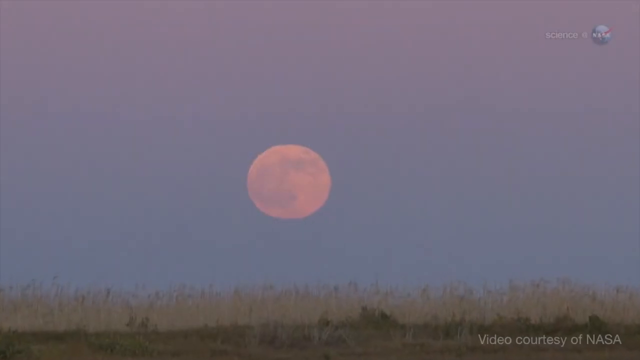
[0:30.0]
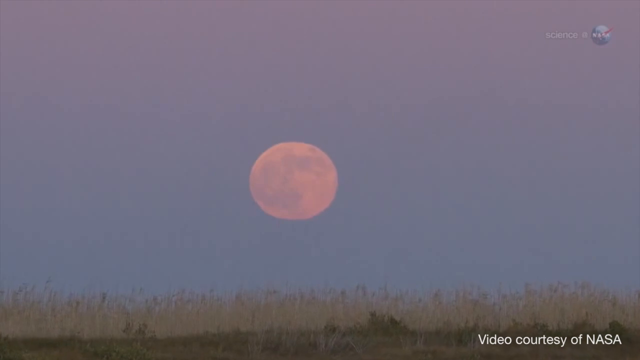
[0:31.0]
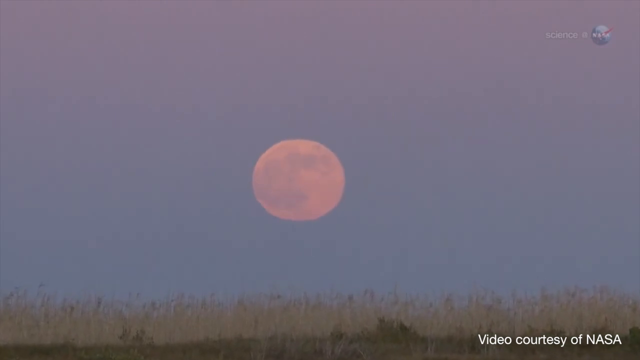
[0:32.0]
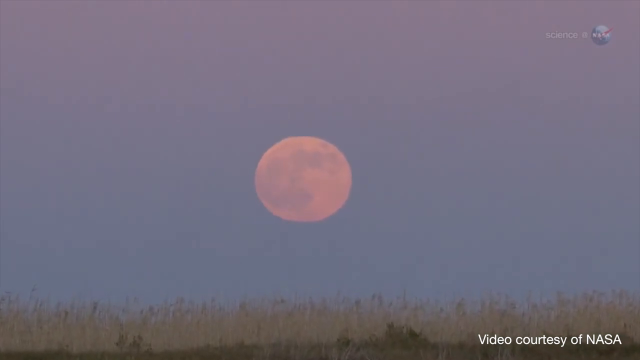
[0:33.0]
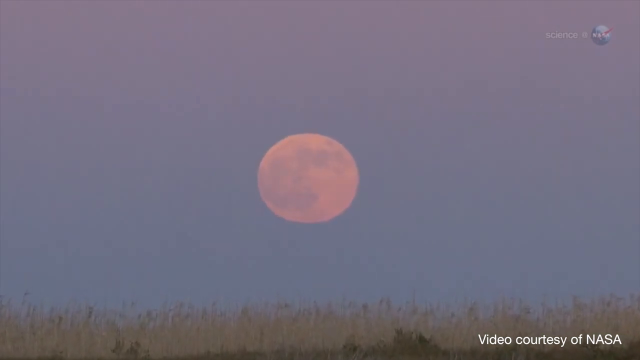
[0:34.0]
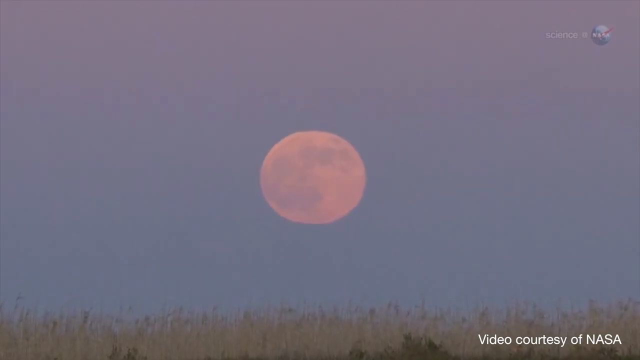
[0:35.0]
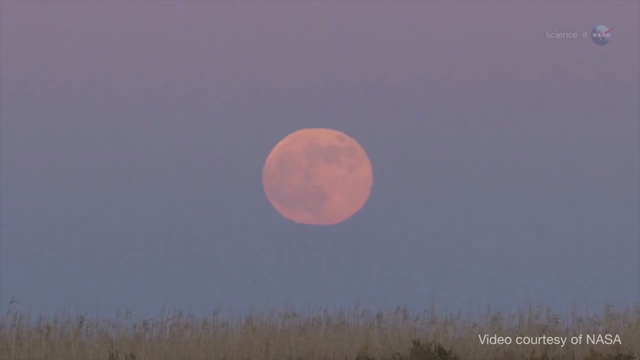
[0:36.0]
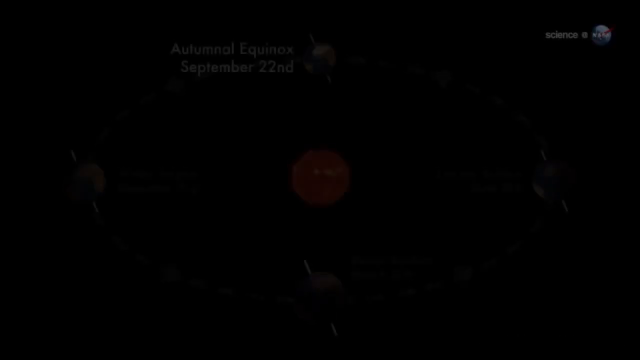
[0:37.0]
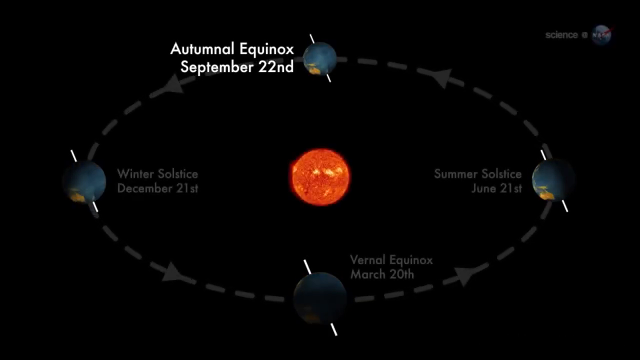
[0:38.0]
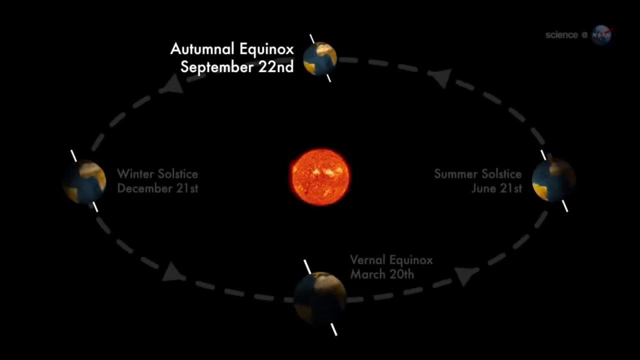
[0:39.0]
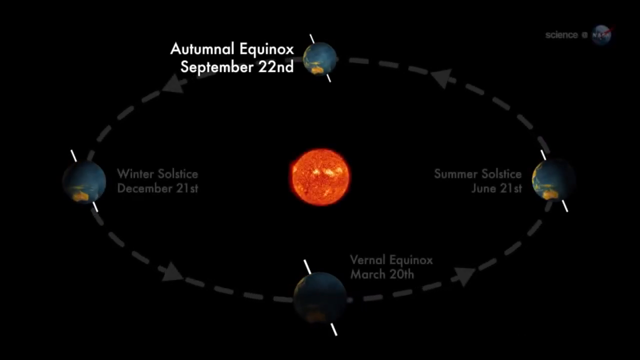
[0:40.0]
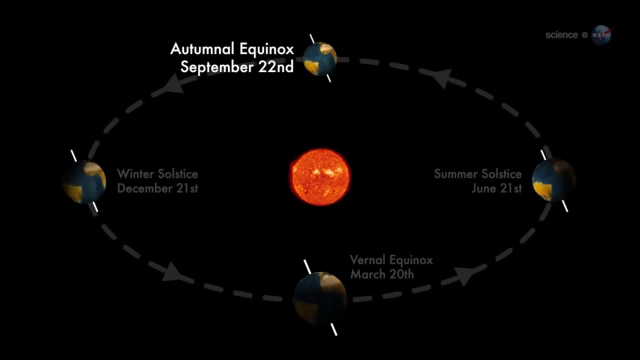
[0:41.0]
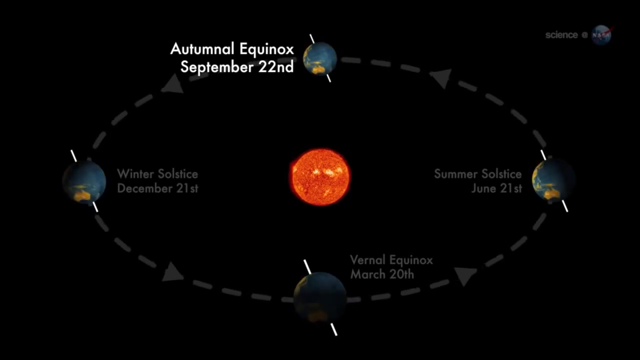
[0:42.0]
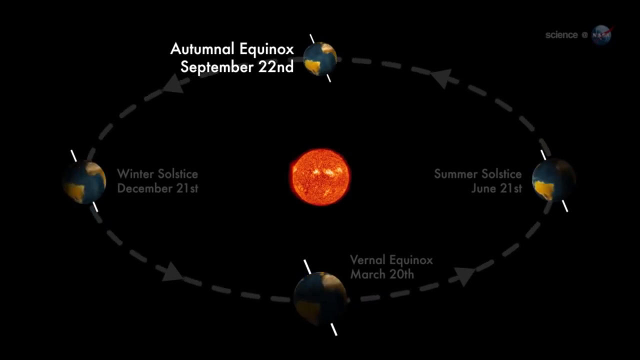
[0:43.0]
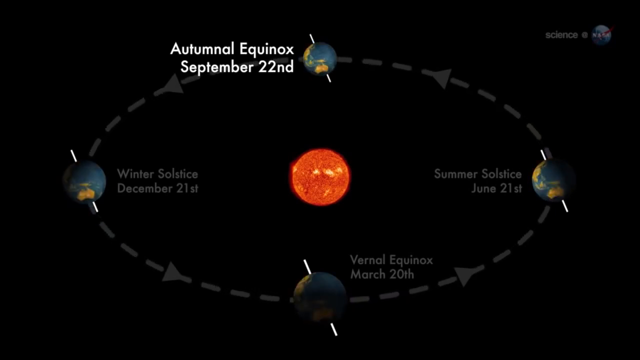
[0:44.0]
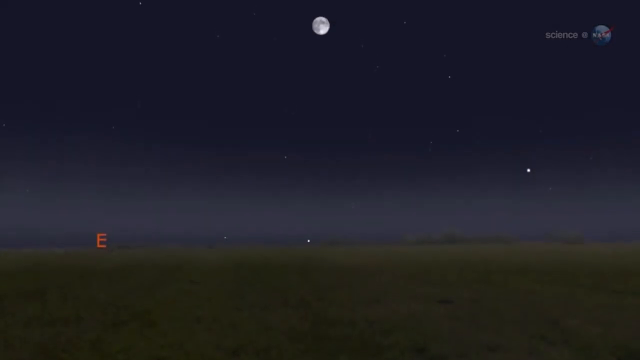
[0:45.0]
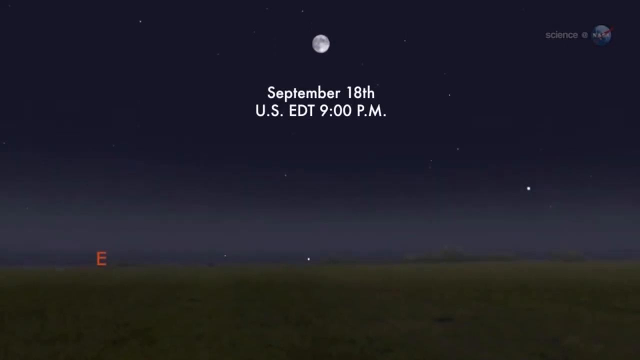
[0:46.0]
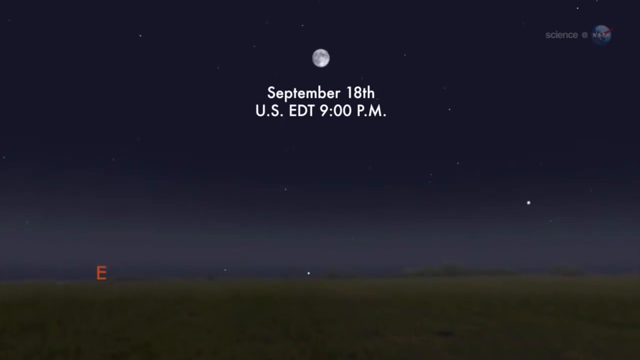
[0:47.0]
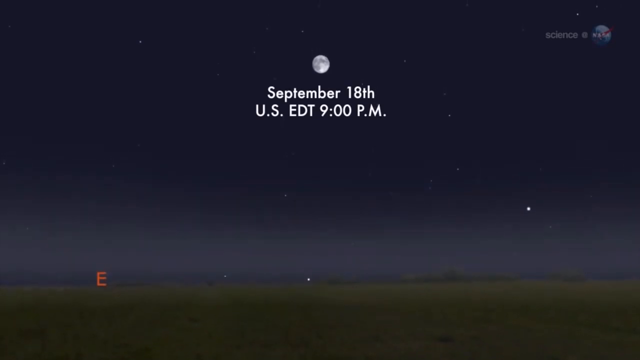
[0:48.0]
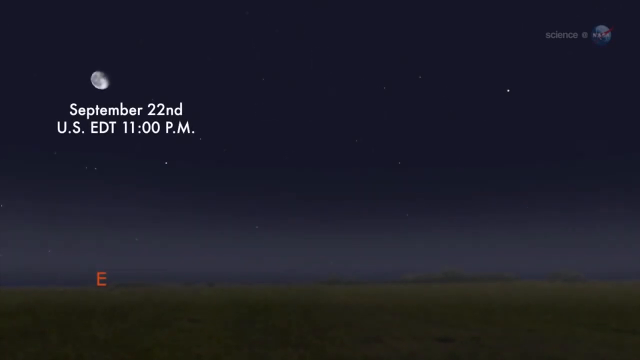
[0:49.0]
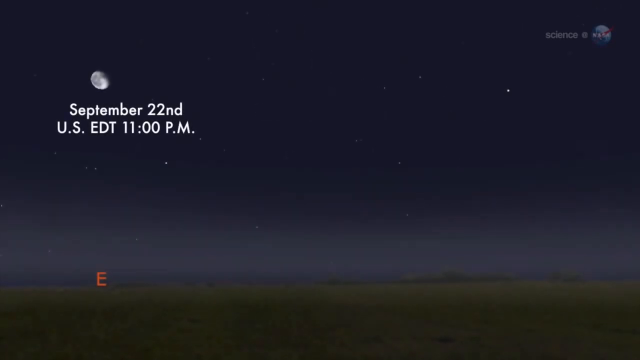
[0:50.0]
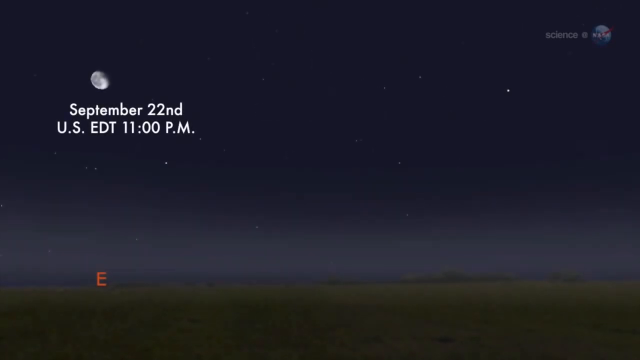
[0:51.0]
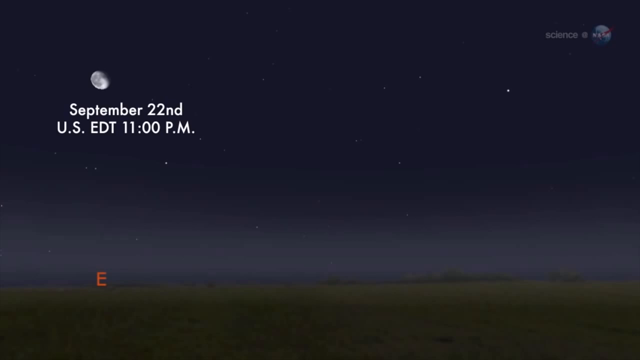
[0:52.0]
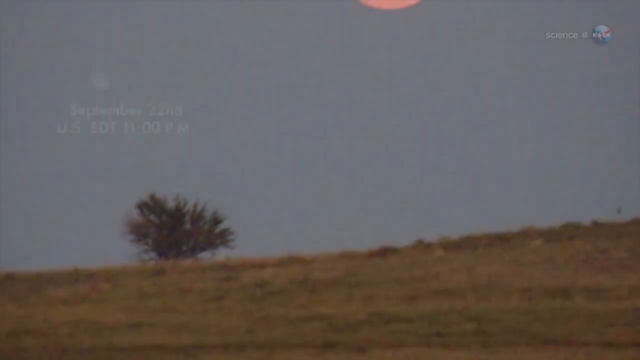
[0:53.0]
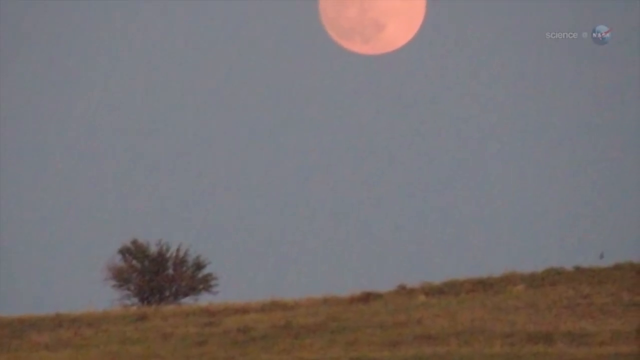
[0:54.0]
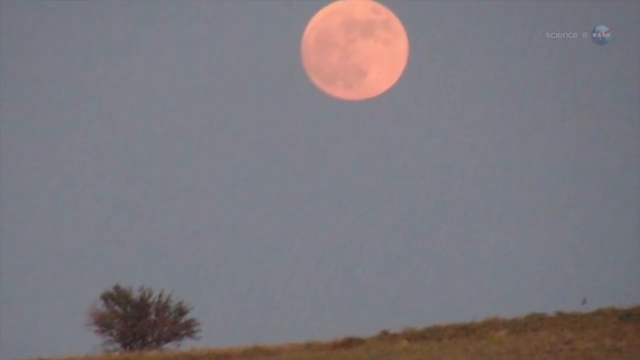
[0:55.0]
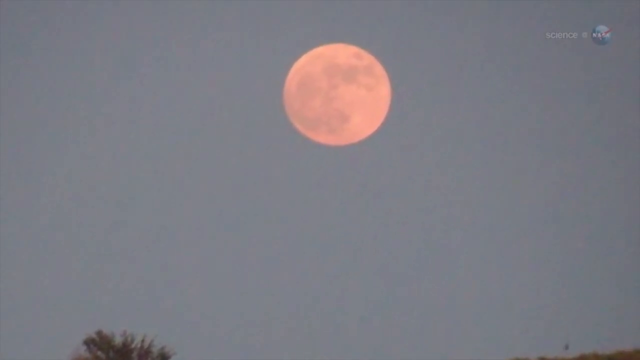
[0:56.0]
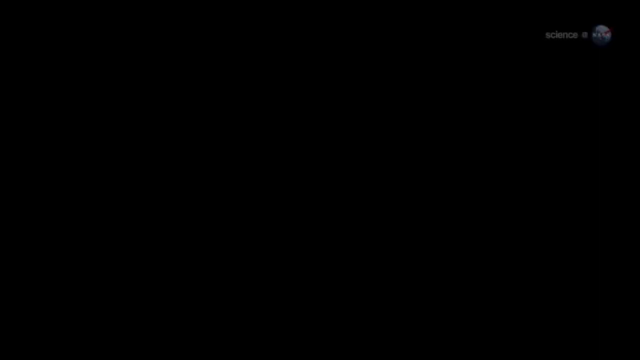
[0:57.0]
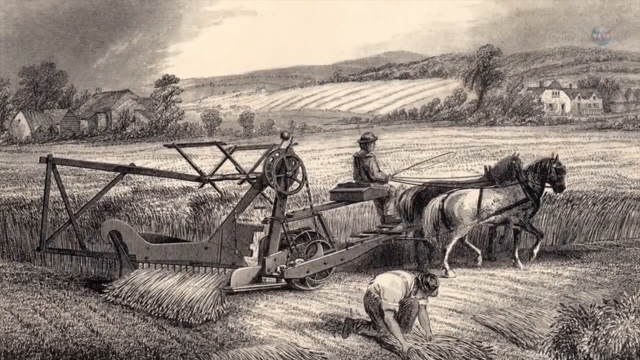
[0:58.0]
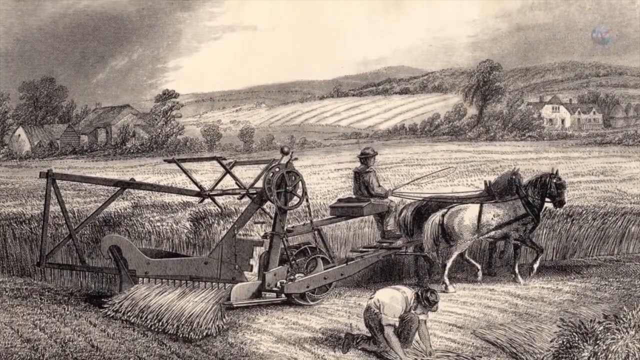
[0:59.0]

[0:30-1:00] What looks like a moon with a reddish hue is off on the horizon, with tall grass at the bottom of the image and a kind of very light purple sky. The view zooms in on the moon and cuts to black. Next, the Earth is shown in a rotating motion around the sun at four different points, with the red sun in the middle, marking the Earth's positions for the autumnal equinox, the winter solstice, the vernal equinox, and the summer solstice. The labels read "autumnal equinox" September 22nd, "winter solstice" December 21st, "vernal equinox" March 20th, and "summer solstice" June 21st. The scene transitions to a night sky above a grassy plain, and white text appears reading "September 18th, U.S. EDT, 9pm," showing the positions of the moon at different times, then "11pm." The red moon appears very briefly, and then a black and white sketch shows a person who looks like a farmer doing farm work with an old-fashioned machine pulled by horses.